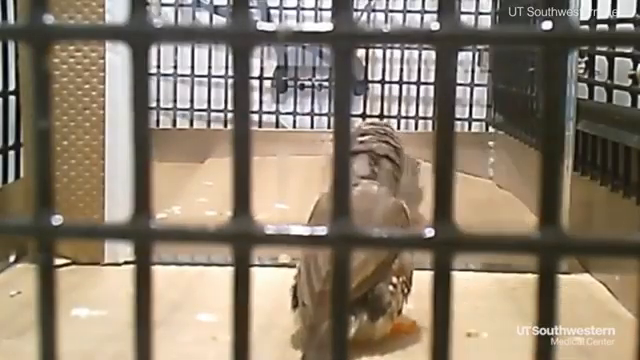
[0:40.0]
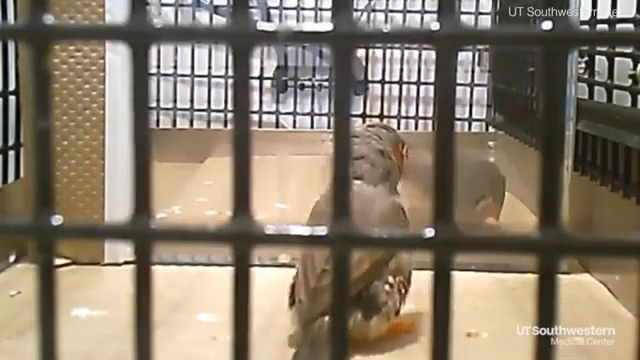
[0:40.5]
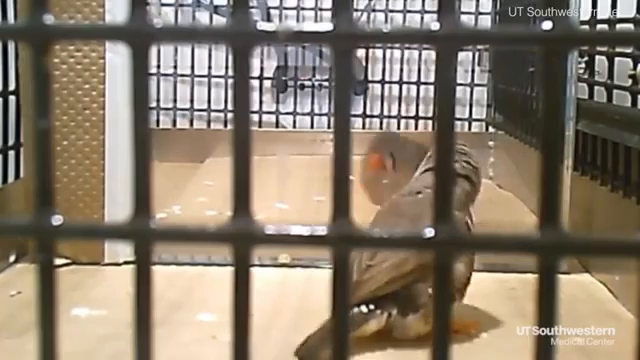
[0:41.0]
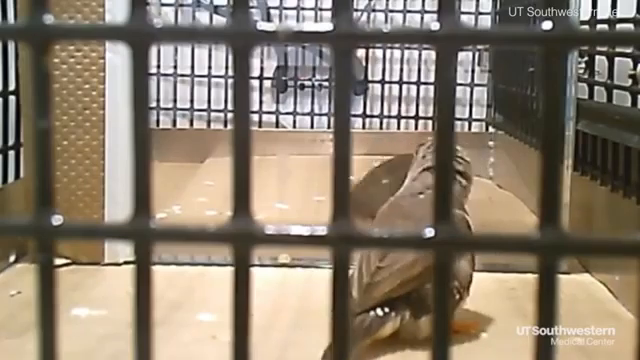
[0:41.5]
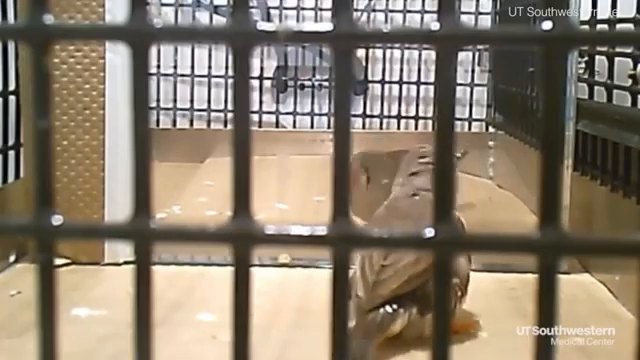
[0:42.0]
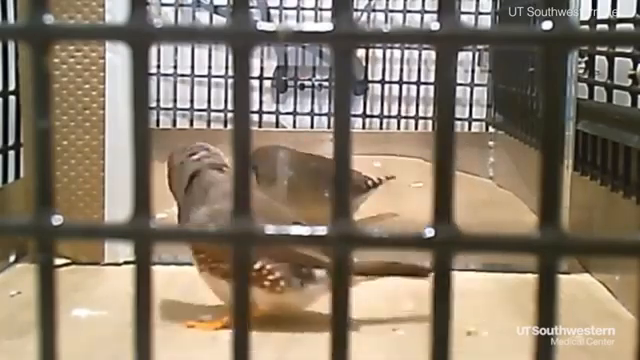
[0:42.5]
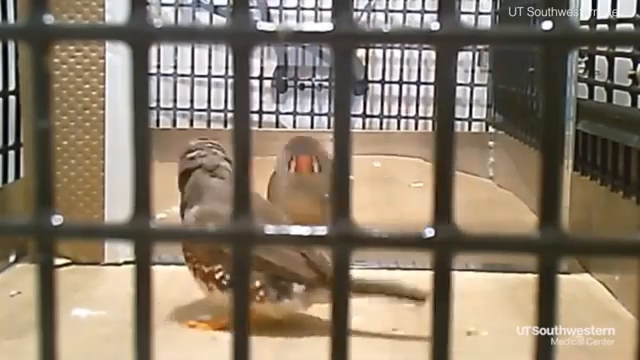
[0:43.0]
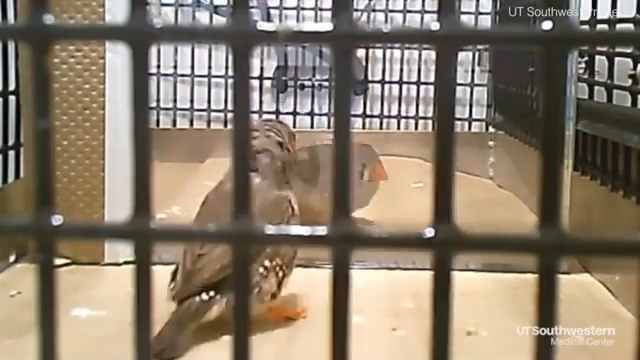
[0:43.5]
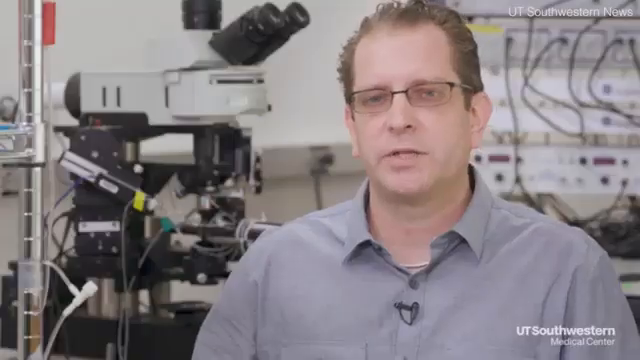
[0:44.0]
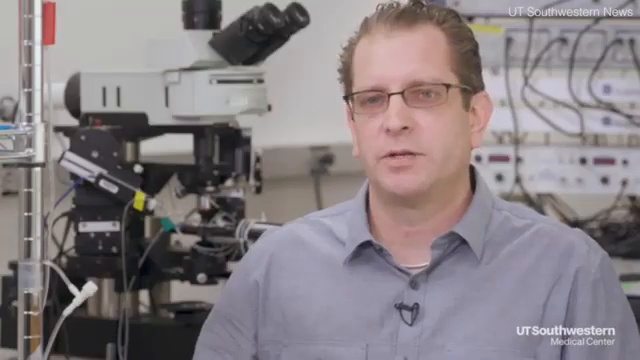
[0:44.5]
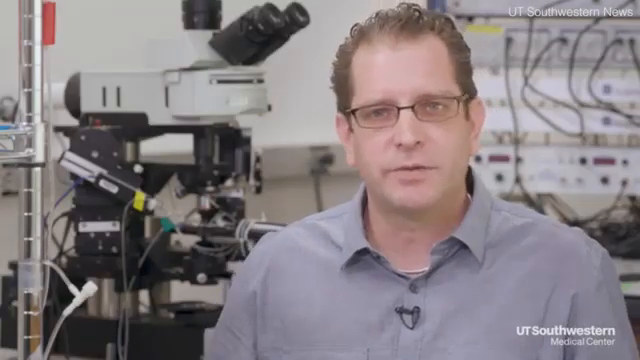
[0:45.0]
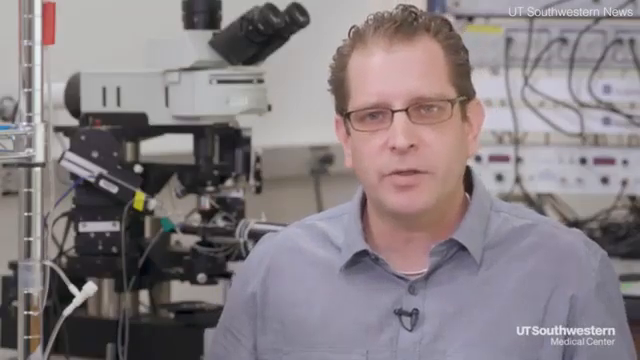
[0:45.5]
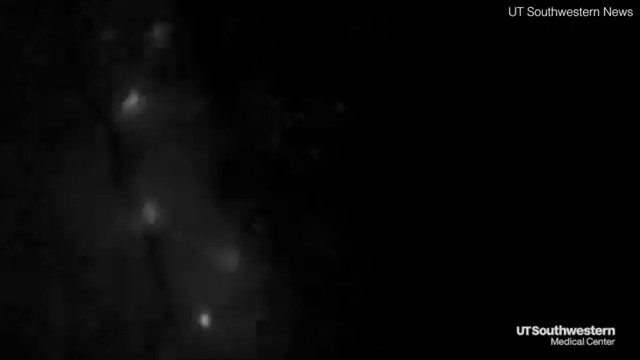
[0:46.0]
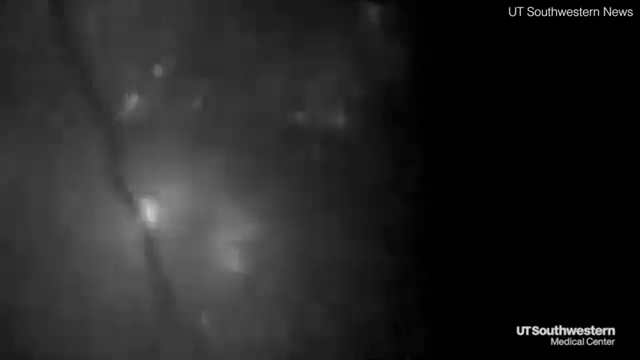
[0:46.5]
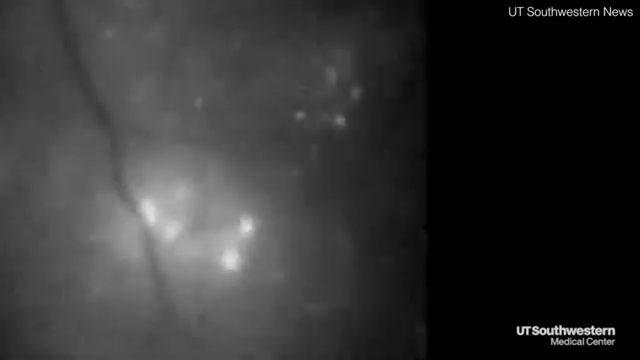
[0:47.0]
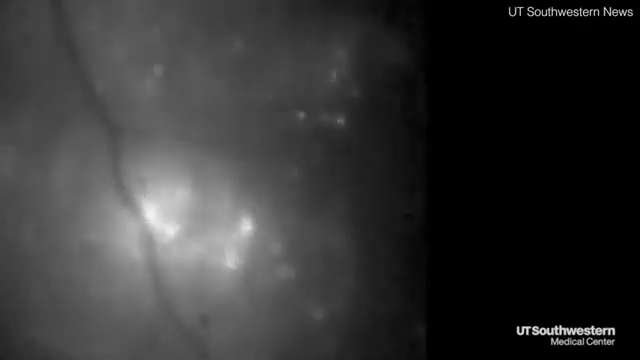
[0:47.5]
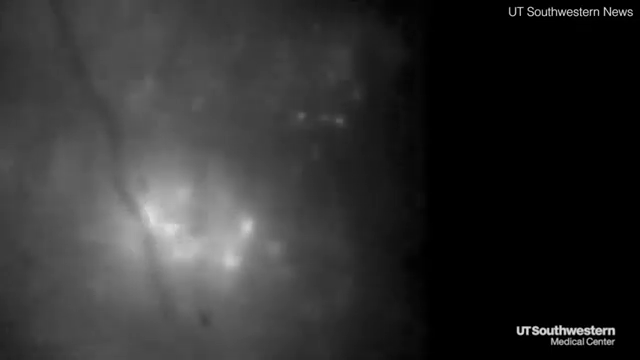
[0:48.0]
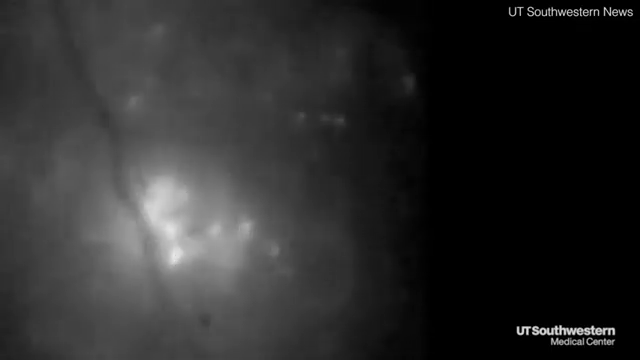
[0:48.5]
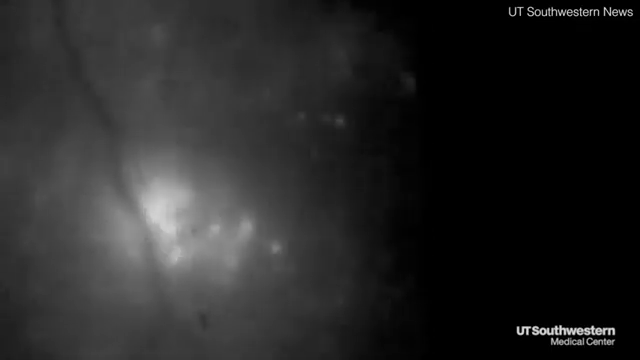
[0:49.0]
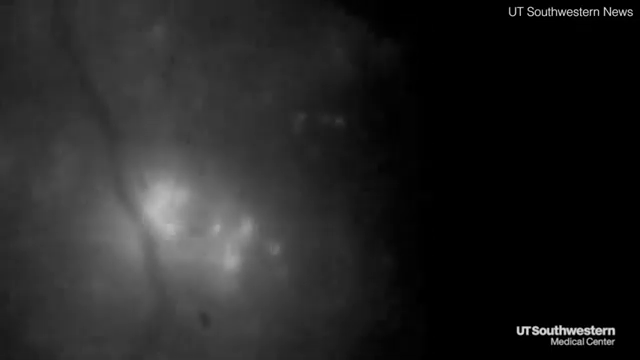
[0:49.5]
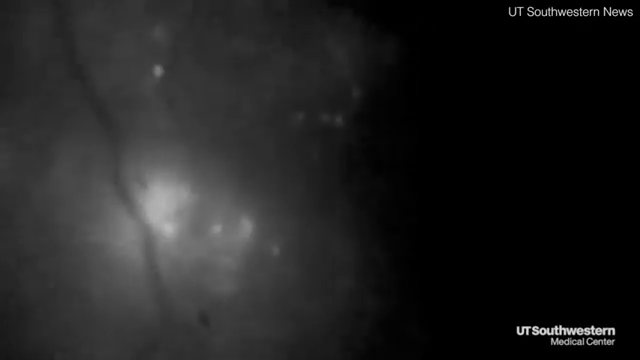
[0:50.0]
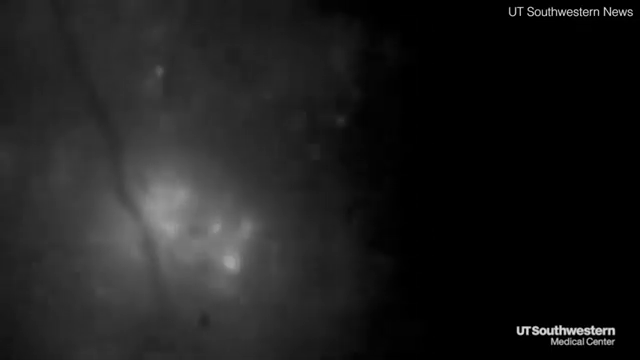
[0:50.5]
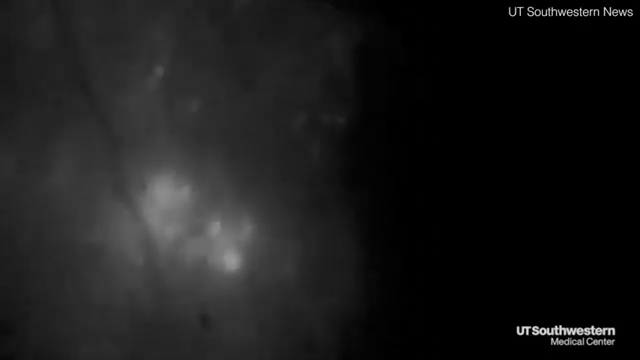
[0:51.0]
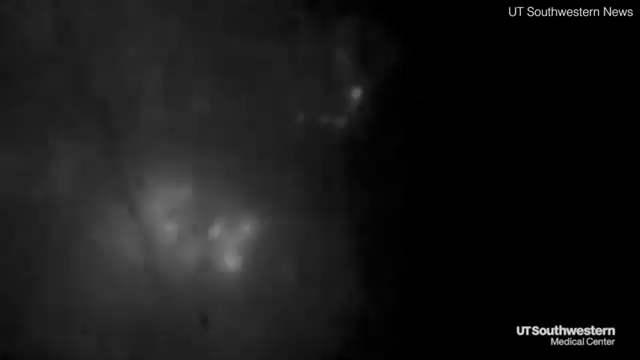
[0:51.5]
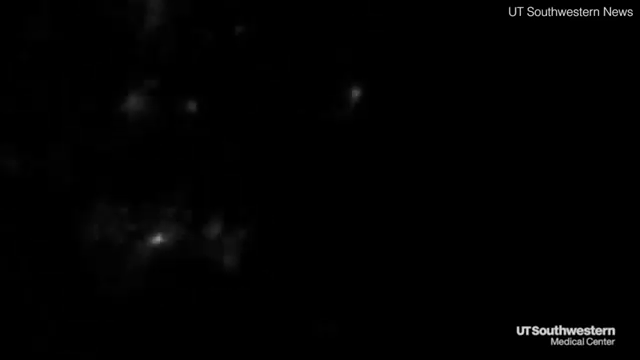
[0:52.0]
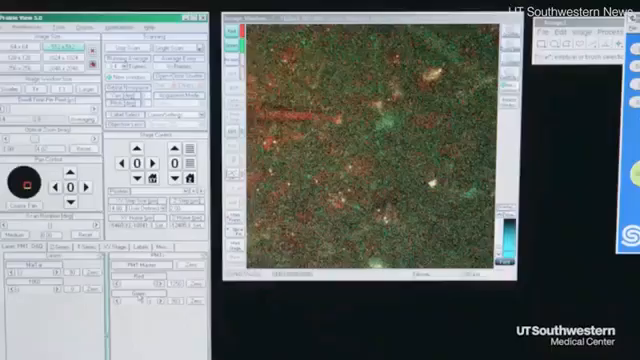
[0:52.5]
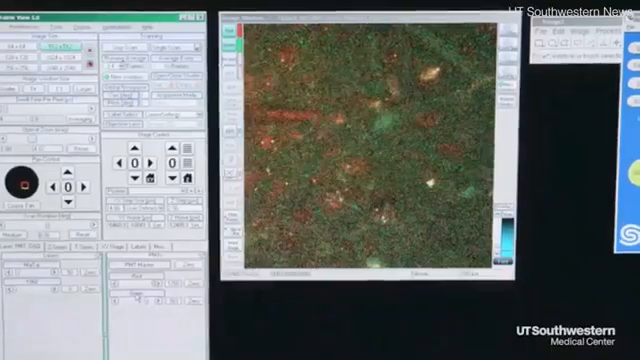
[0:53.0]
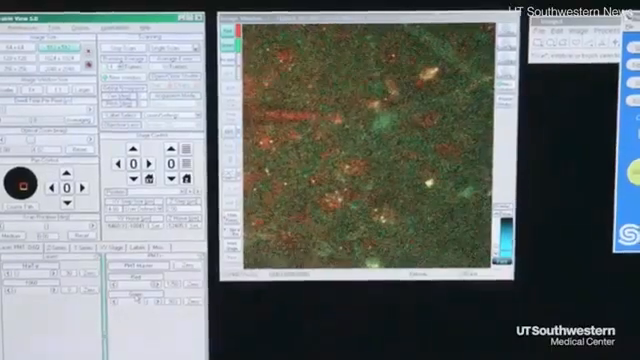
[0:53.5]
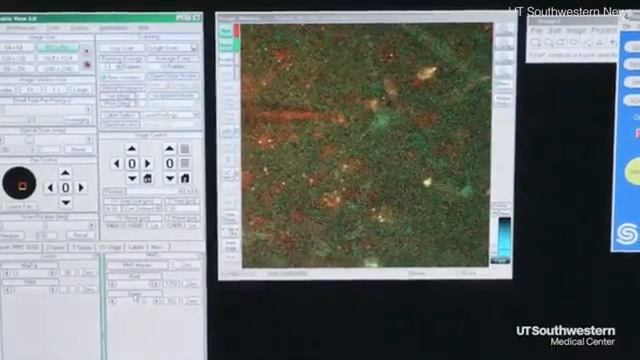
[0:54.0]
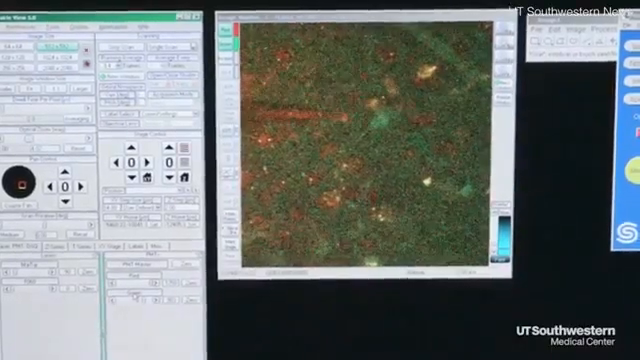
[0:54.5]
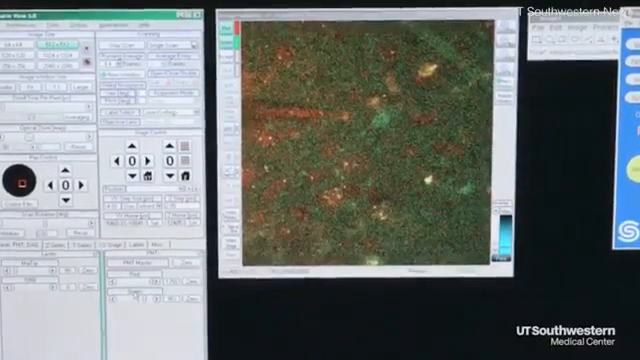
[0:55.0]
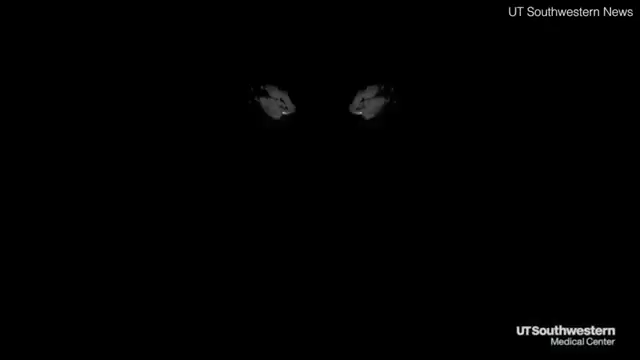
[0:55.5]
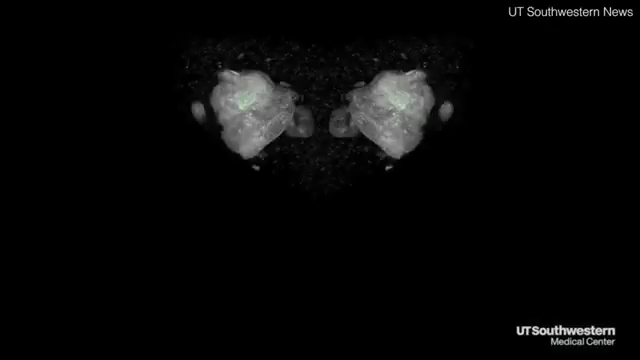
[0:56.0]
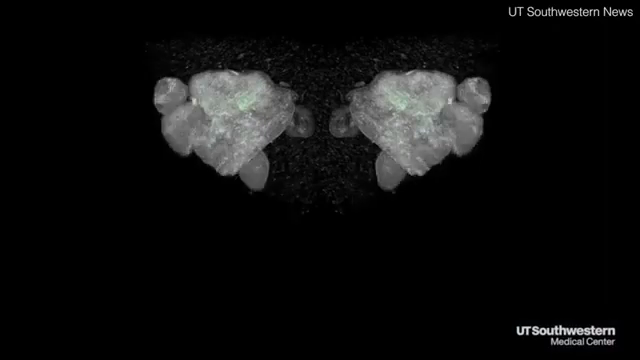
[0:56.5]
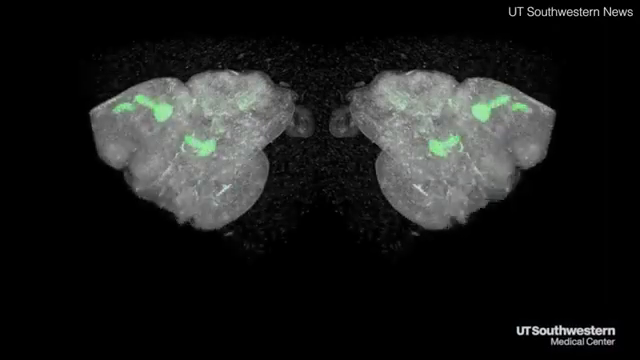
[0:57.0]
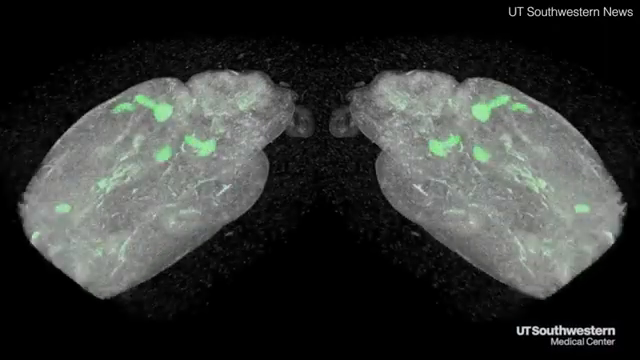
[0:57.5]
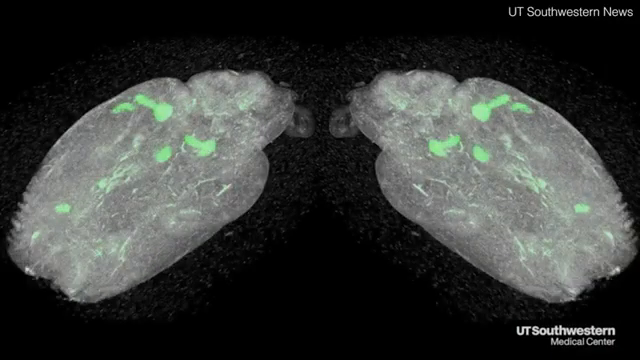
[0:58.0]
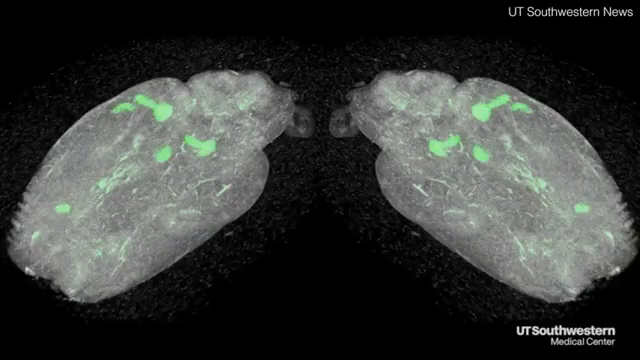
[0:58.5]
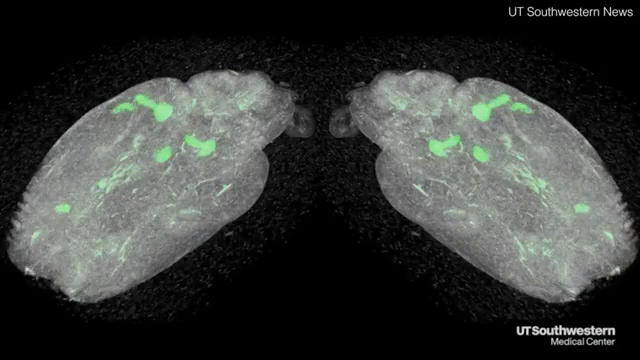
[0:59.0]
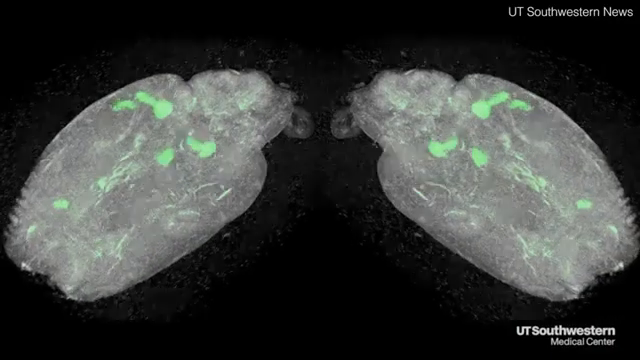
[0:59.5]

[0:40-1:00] Two birds are on the bottom of the cage, which is white, still sort of playing and interacting with each other. The view switches back to the assistant professor being interviewed, apparently in a science lab. Next comes a recording of something being looked at through a microscope; whatever it is appears luminescent, with the light visibly varying. A computer screen then shows something very high-tech, with about six or seven boxes of settings, each box having around 40 settings. The screen switches to a picture that looks like the ground, like grass, with two other windows open. The view then returns to something that almost looks like lungs, though it is unclear whether it is, with green splotches appearing on it.